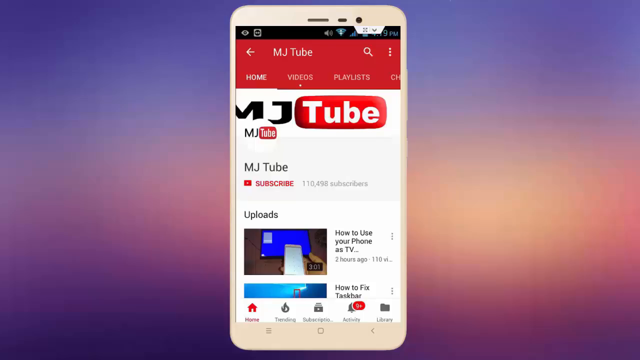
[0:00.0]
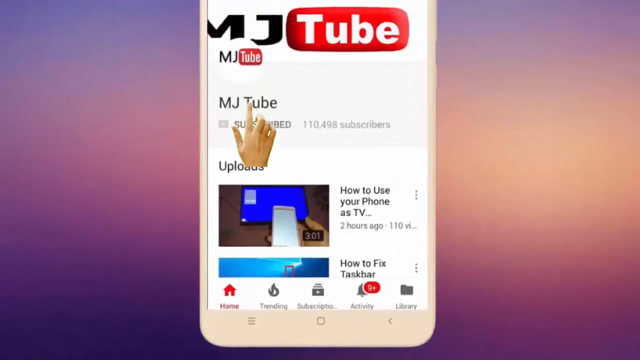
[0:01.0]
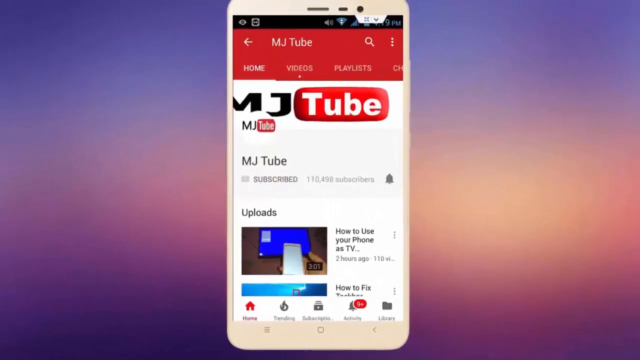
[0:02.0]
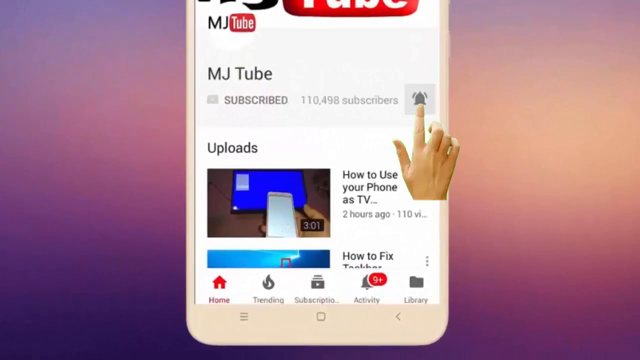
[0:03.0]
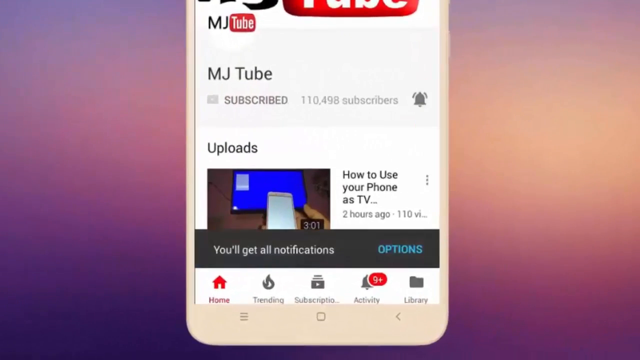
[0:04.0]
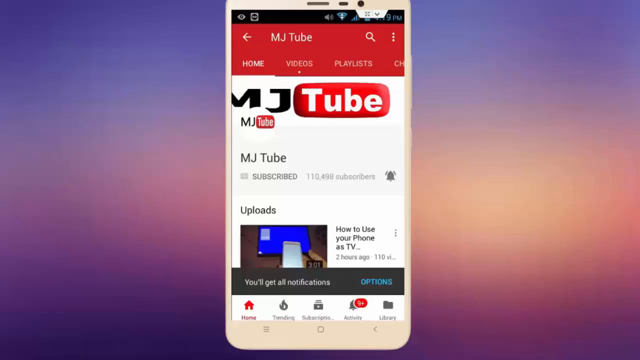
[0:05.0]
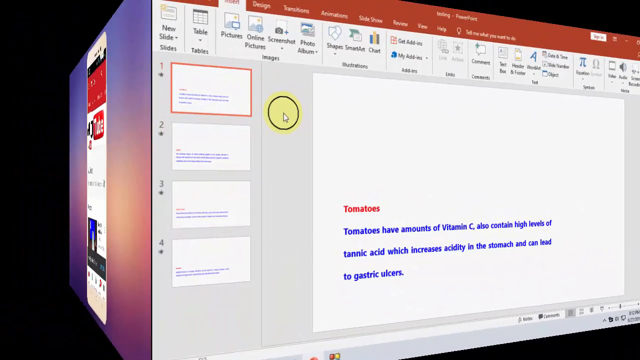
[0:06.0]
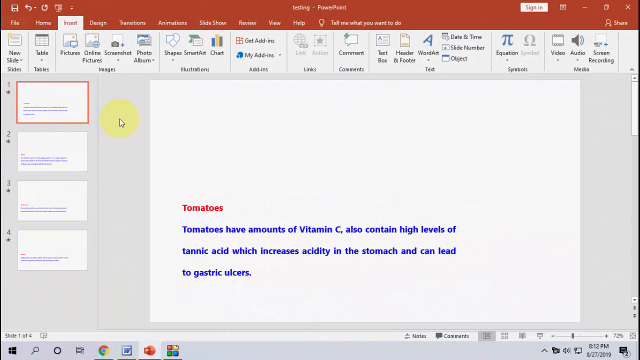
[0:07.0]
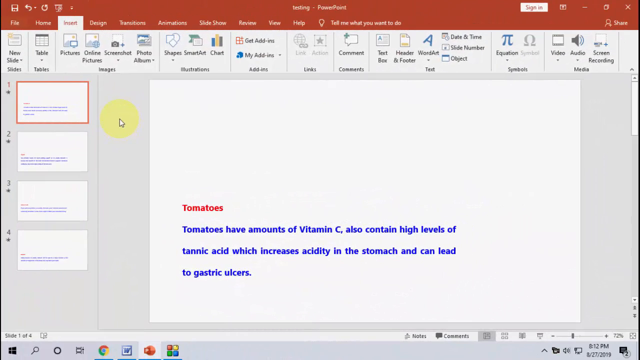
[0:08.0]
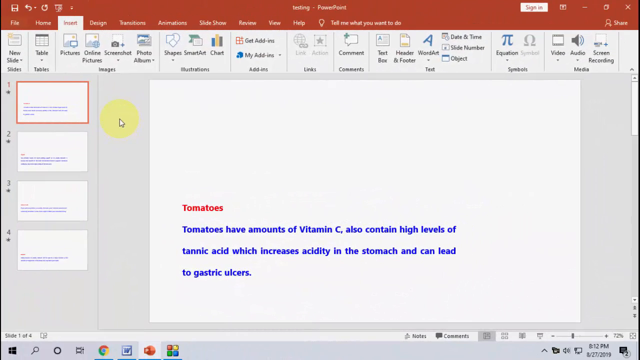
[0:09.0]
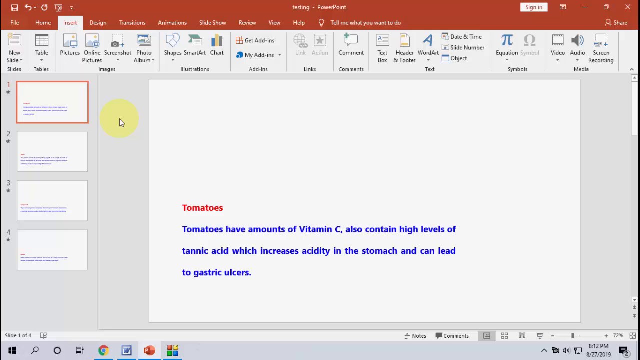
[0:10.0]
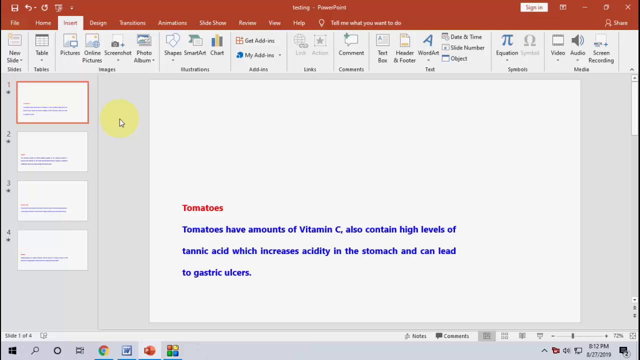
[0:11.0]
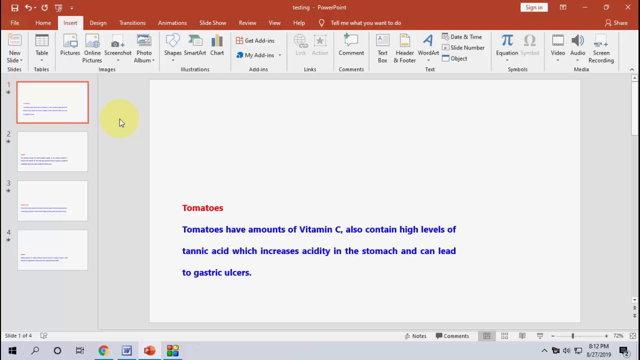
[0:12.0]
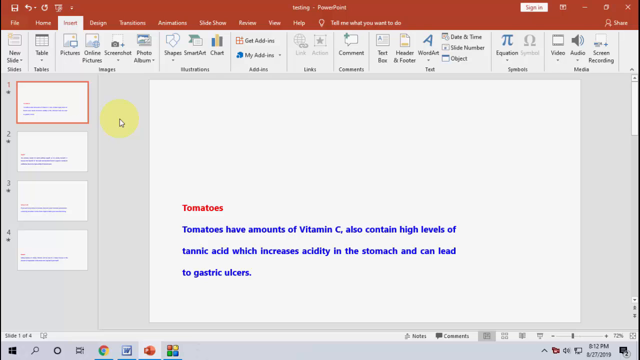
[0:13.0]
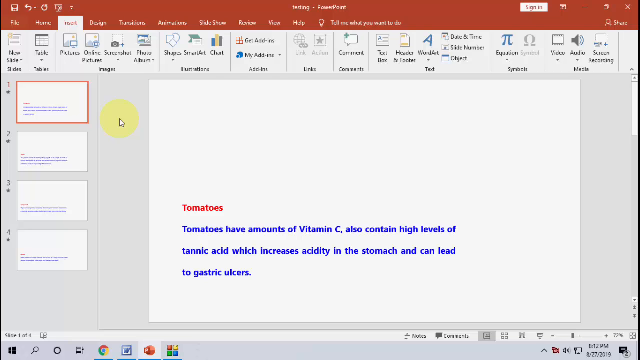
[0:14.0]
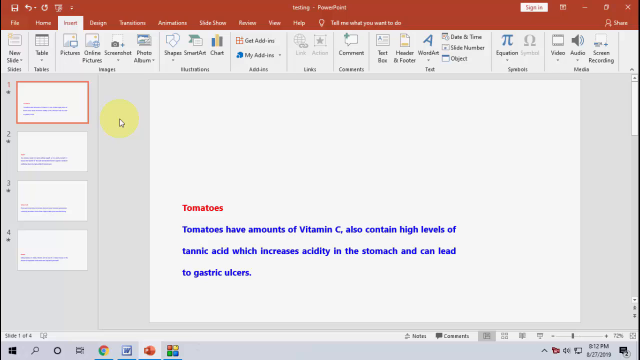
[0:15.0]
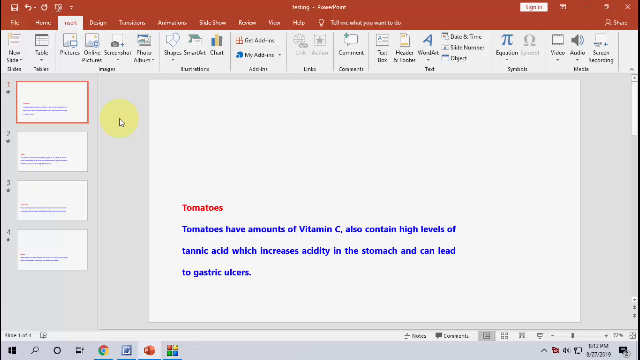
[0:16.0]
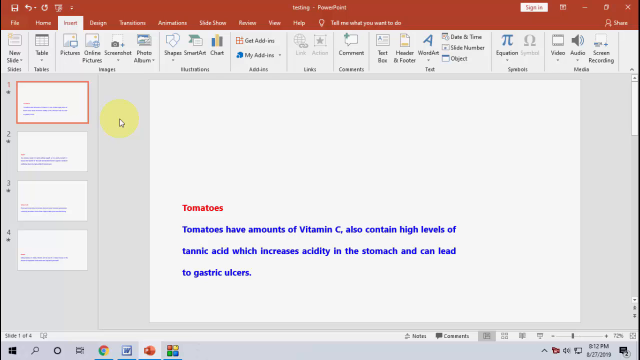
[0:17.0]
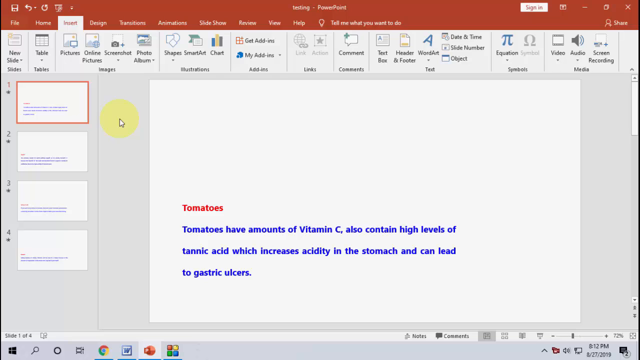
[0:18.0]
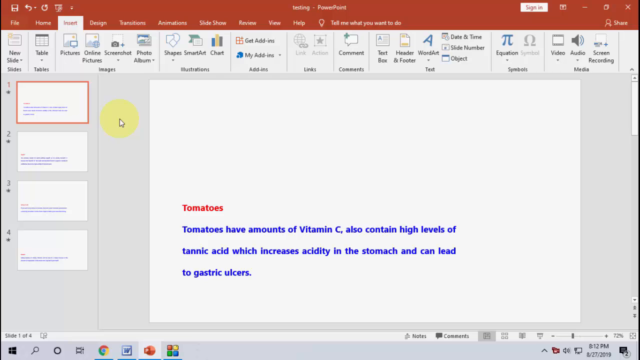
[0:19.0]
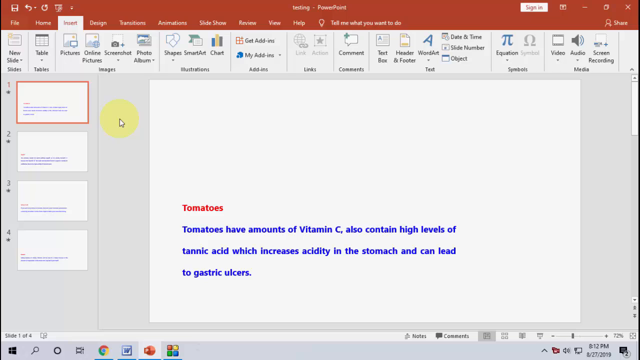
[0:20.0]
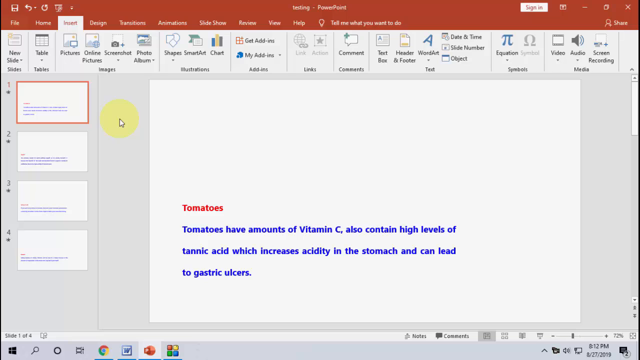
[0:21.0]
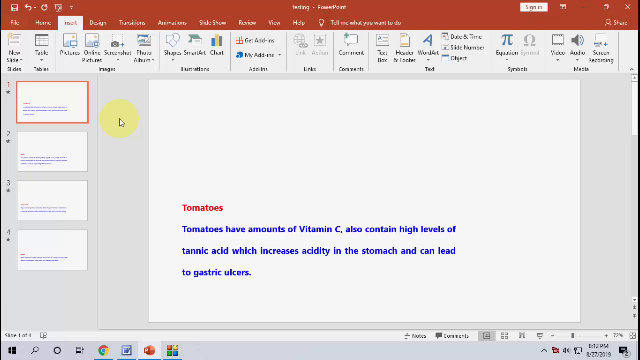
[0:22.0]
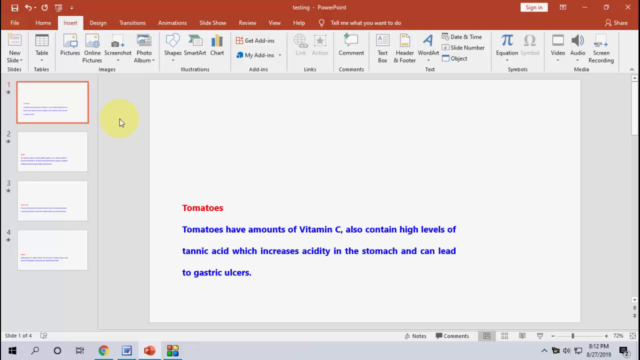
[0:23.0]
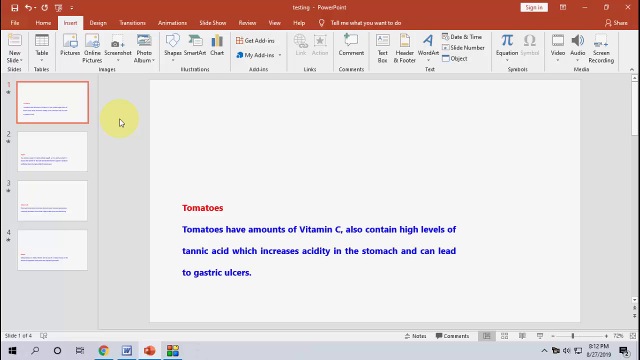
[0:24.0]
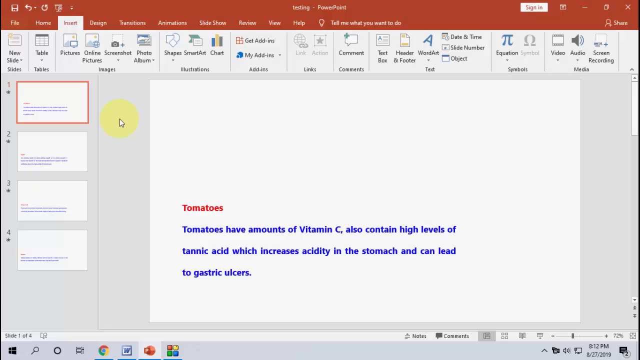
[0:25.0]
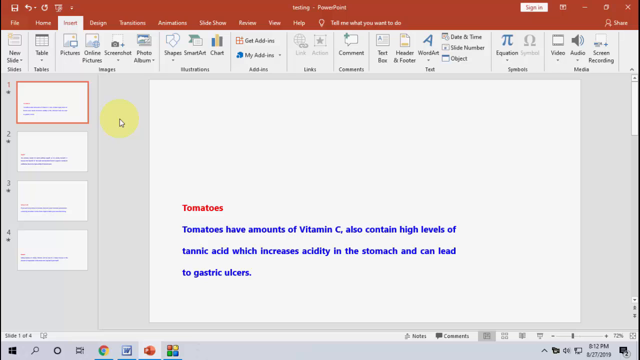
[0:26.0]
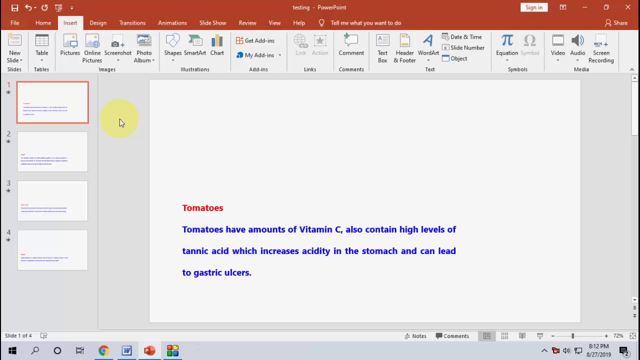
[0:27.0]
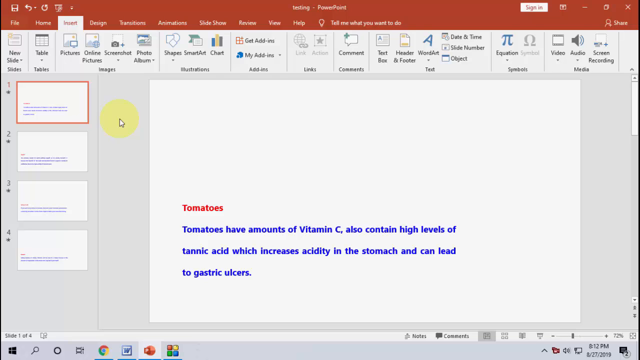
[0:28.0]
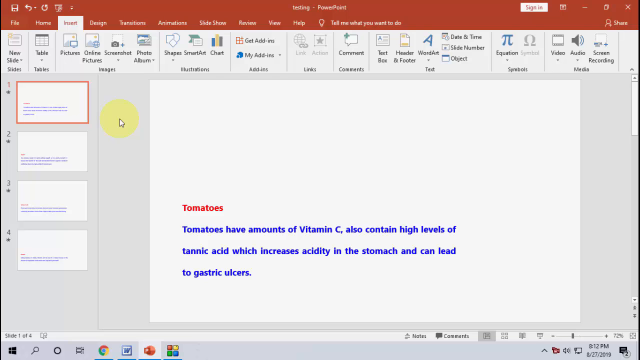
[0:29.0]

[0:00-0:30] A digital image of an iPhone appears, with a logo reading "MJTube" at the top of the phone's screen. The video zooms in and a hand icon appears on the screen for a moment and hits the subscribe button. The view zooms out so the phone is visible on the screen, then zooms in once more. The hand hits the bell icon, and text reading "you'll get all notifications" appears in white on a gray background. The screen then changes to PowerPoint, with a red header that says "PowerPoint" at the top and the cursor on the left side inside a yellow circle. The slide reads "tomatoes" in red text, and below it in blue text on a white background: "tomatoes have amounts of vitamin C, also contain high levels of tannic acid which increases acidity in the stomach and can lead to gastric ulcers." On the left side of the screen there are four slides in total; the first, the one being shown, is highlighted with a red rectangle around it. Along the top are all kinds of buttons, each with a label underneath, such as audio, equation and table.